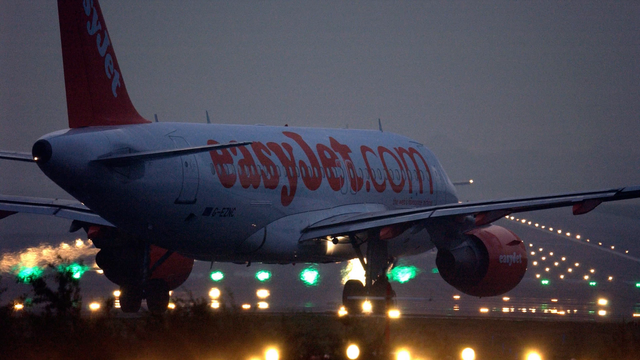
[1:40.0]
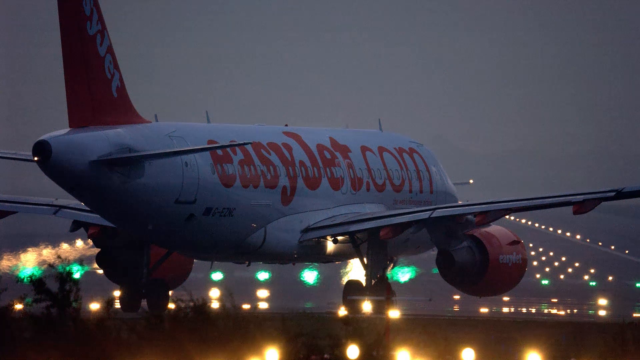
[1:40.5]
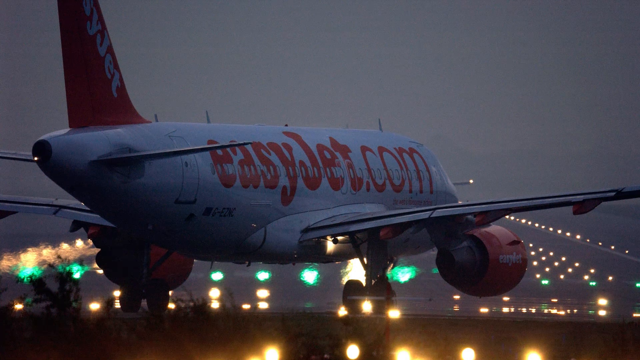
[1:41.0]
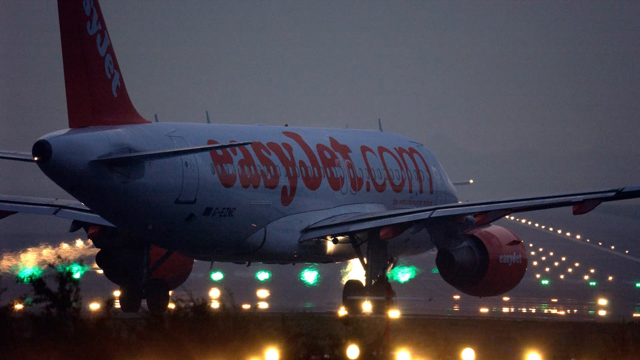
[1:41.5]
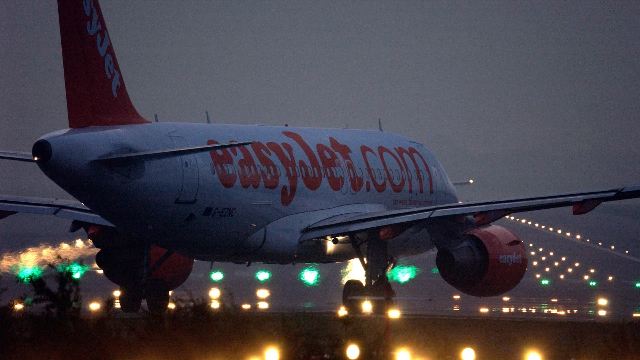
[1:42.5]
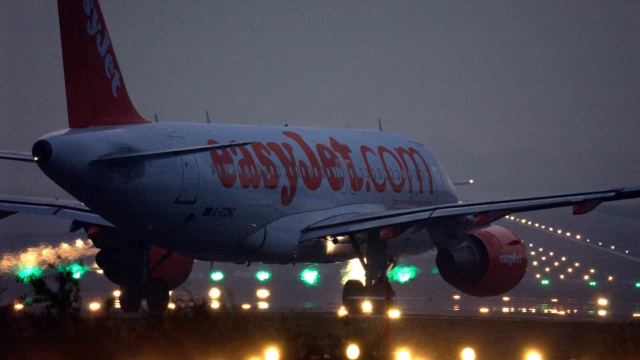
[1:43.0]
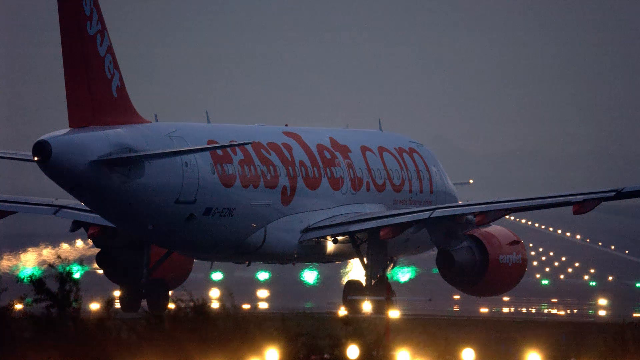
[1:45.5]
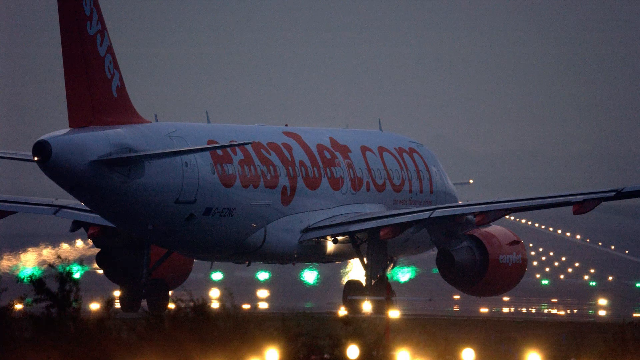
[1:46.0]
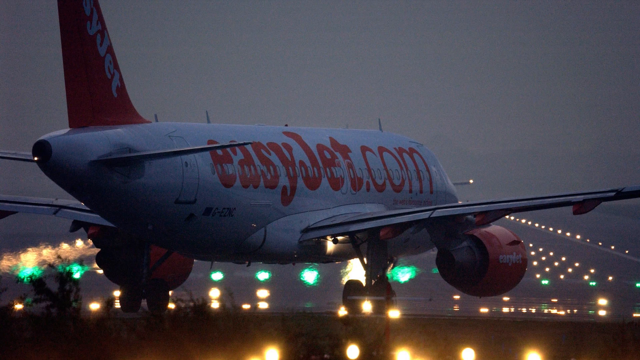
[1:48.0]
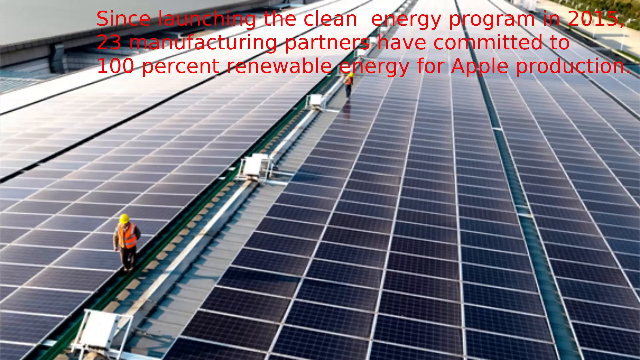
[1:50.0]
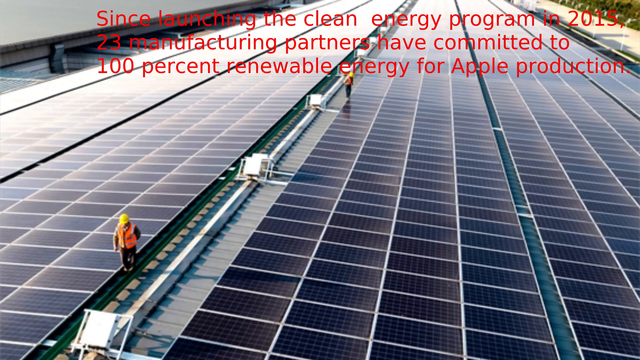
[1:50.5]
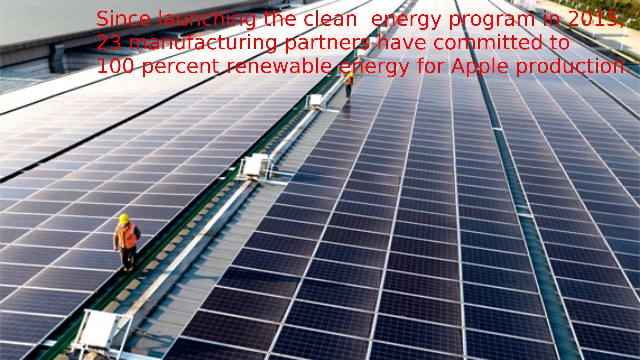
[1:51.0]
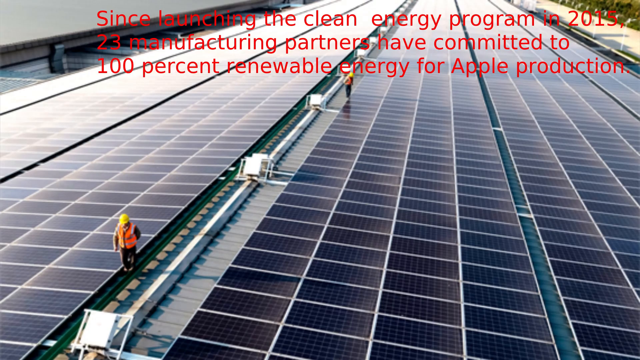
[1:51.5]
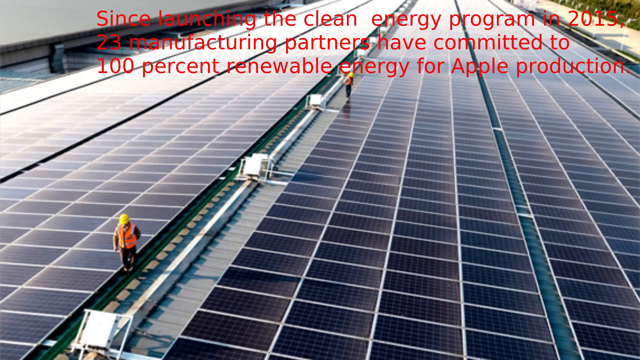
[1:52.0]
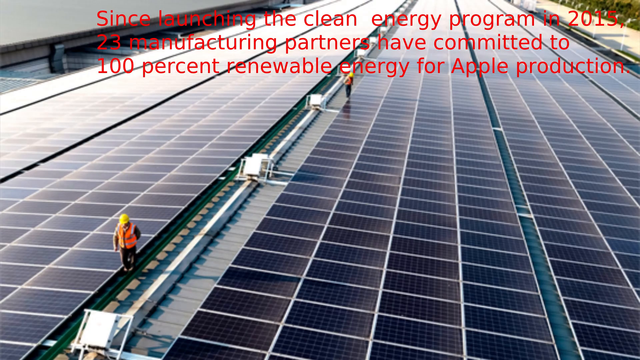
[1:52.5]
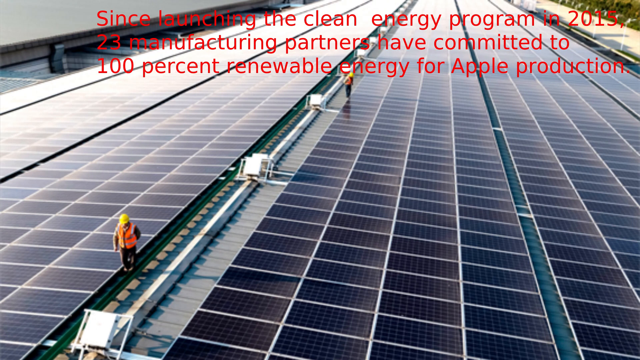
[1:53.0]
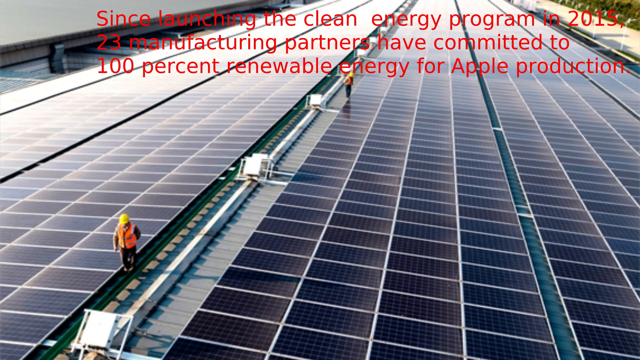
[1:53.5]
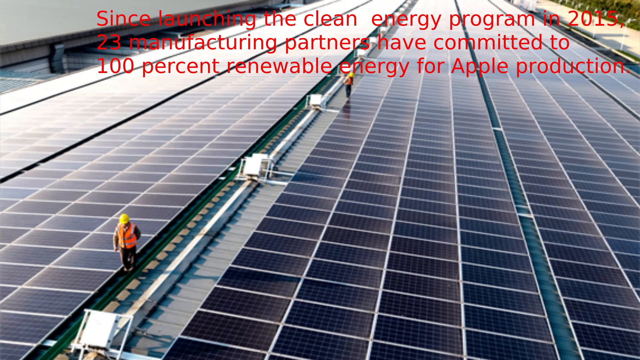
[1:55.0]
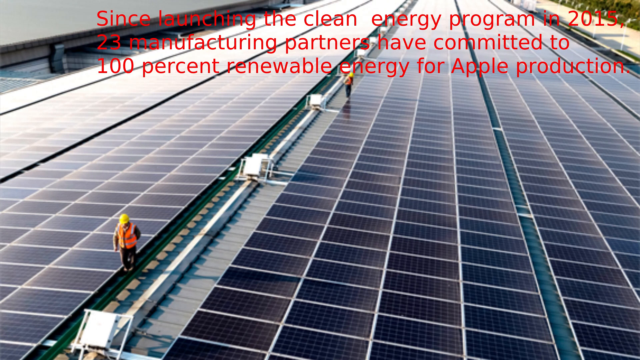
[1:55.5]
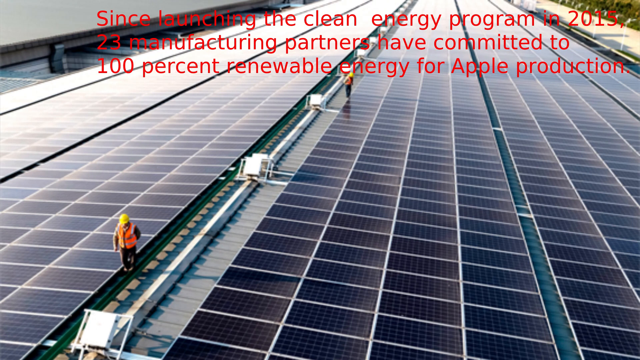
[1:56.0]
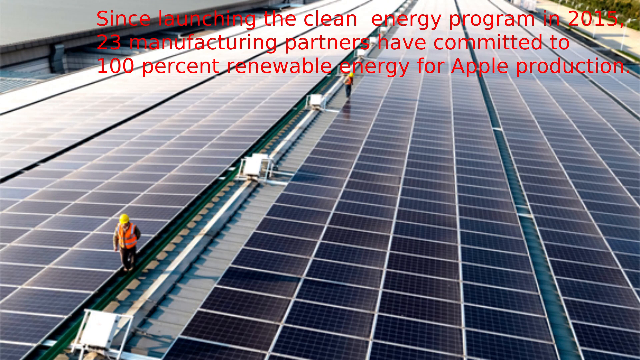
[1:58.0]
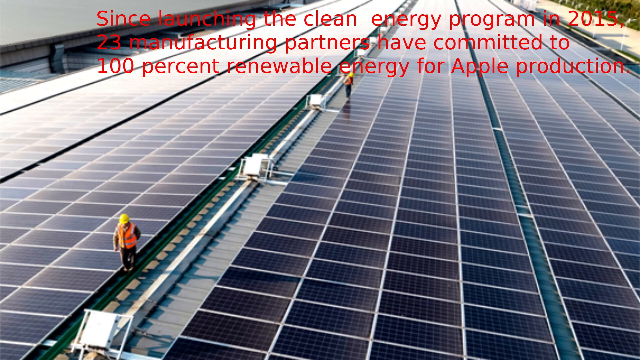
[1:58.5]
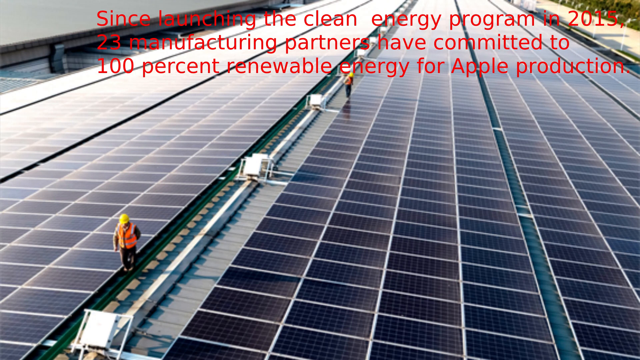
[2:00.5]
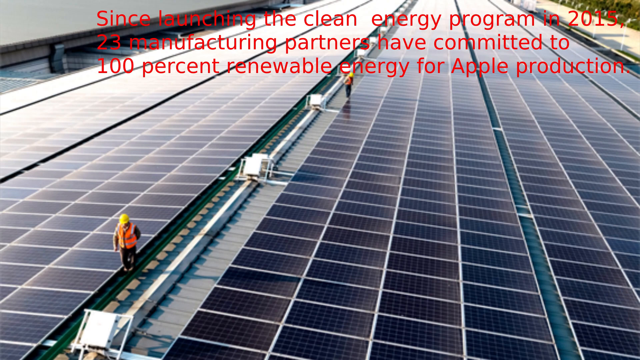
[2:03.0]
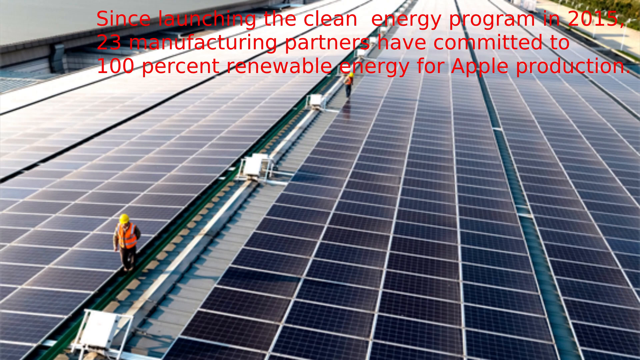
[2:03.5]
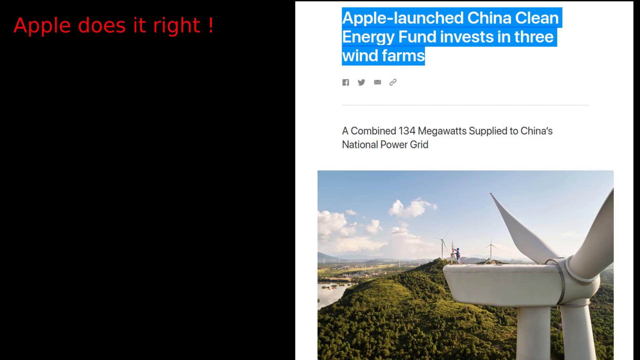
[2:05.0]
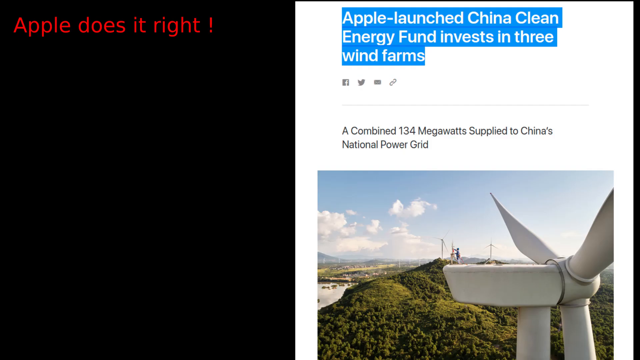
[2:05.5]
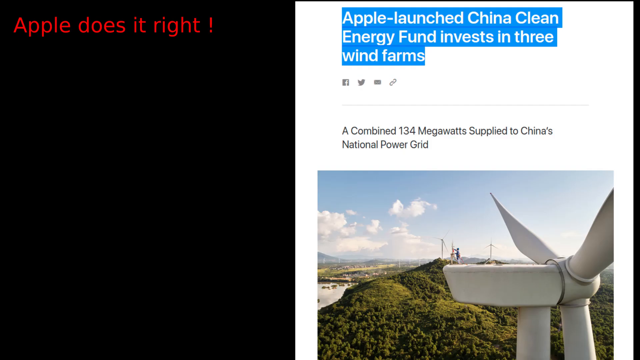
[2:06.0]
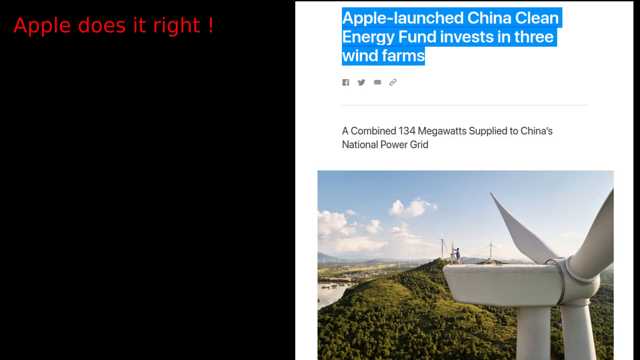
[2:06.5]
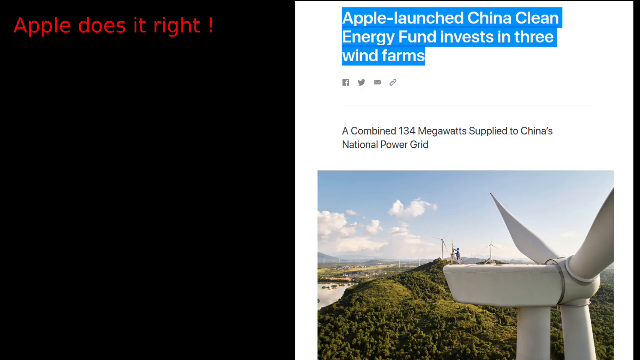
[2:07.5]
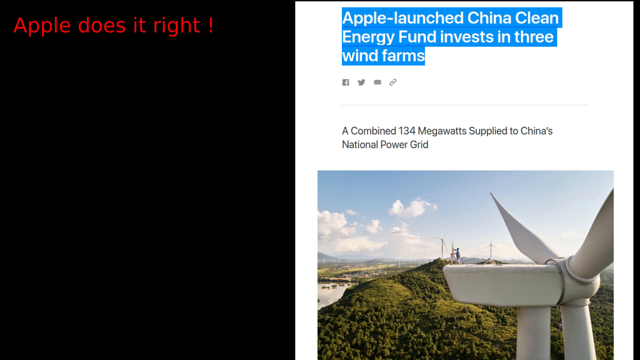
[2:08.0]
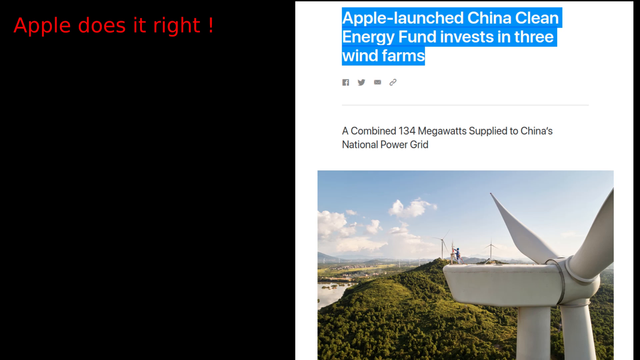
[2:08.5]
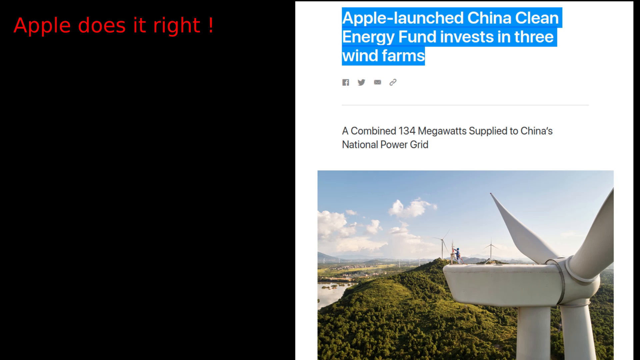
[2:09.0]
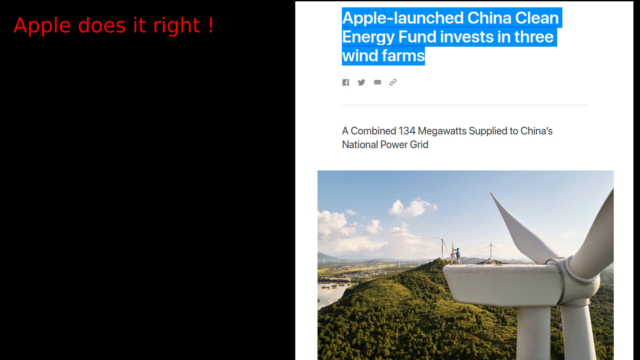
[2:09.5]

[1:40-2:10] A completely different image shows an aeroplane taking up the full screen. The runway is in the bottom half of the screen with lights, including circle lights indicating the direction for the plane. The side of the plane says "easyjet.com". The wings and body are white, the back door is visible on the left side, and the wing going upwards vertically is orange. The runway lights are yellow, white and green. This image stays on for seven seconds, and then a close-up view of the solar panels appears with red writing above, and a workman in the bottom left section of the picture. This image stays on for another six seconds, and then a new screen has a black section on the left with the red wording "Apple does it right!" in the top left corner, and a white background on the right with wording that says "Apple launched China clean energy fund invest in three wind farms". At the bottom is an image of the wind turbine.